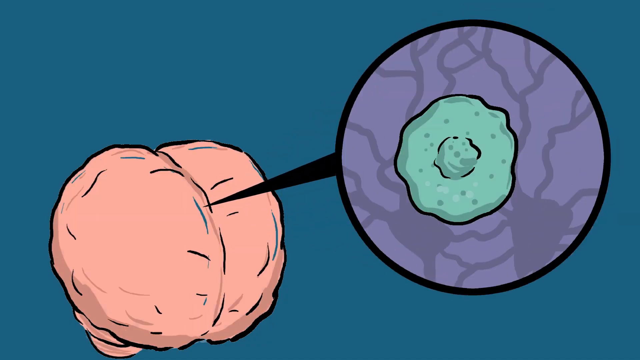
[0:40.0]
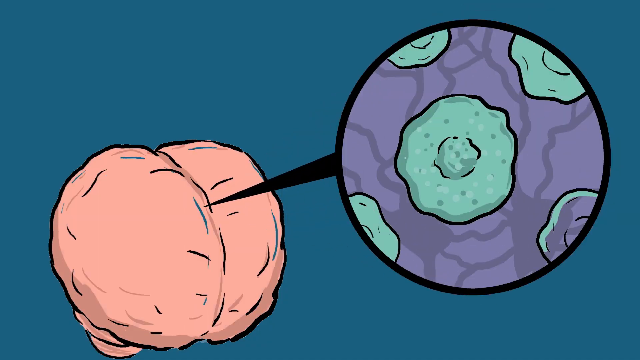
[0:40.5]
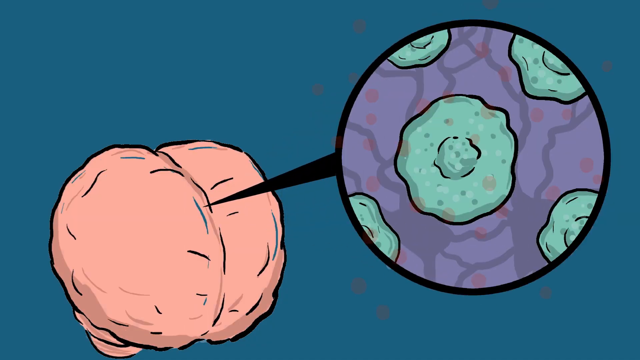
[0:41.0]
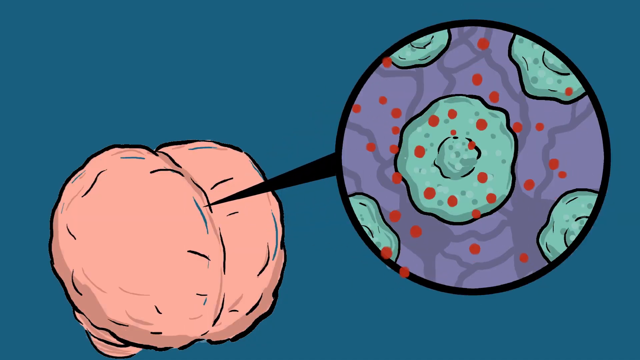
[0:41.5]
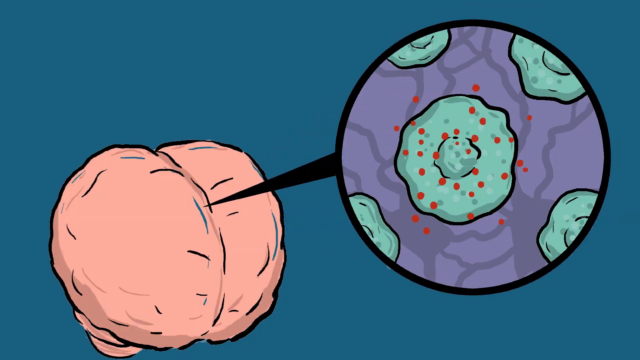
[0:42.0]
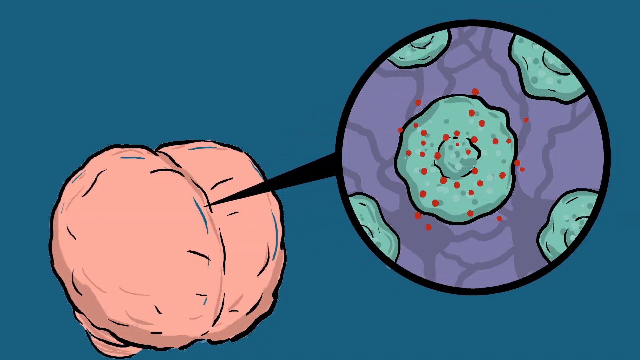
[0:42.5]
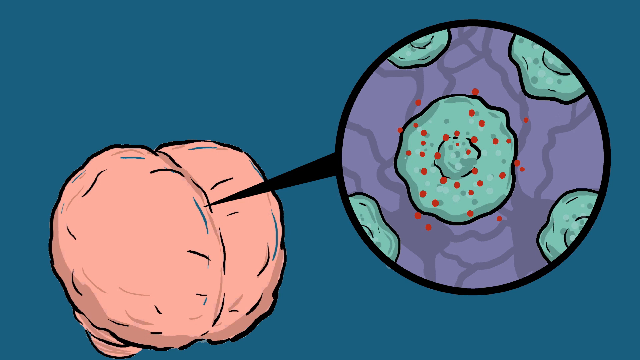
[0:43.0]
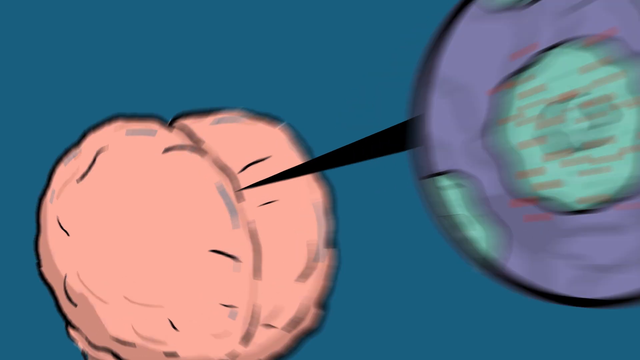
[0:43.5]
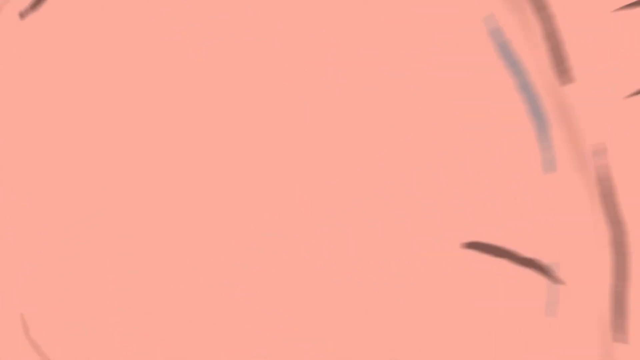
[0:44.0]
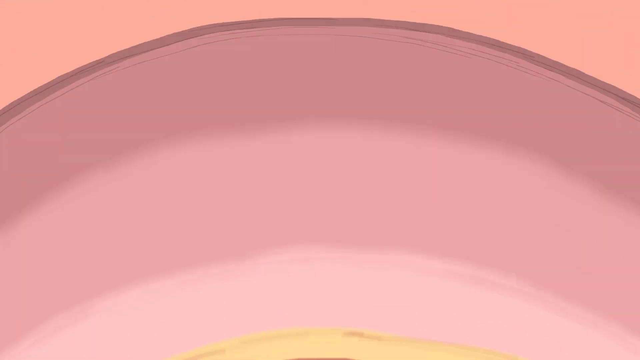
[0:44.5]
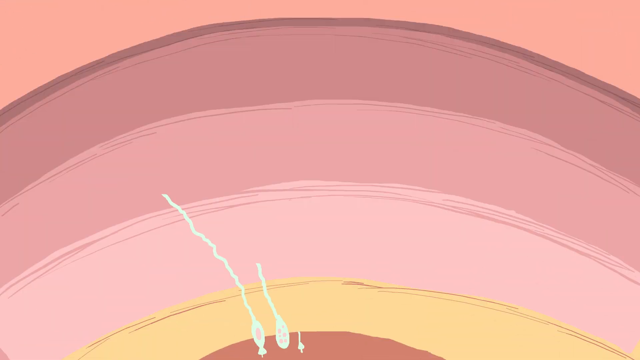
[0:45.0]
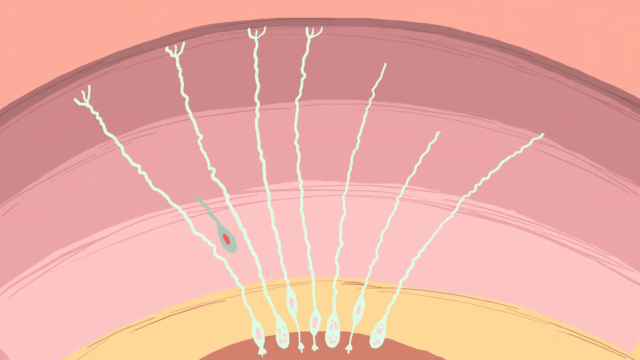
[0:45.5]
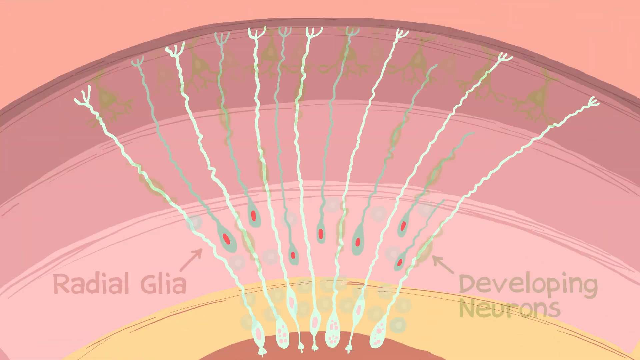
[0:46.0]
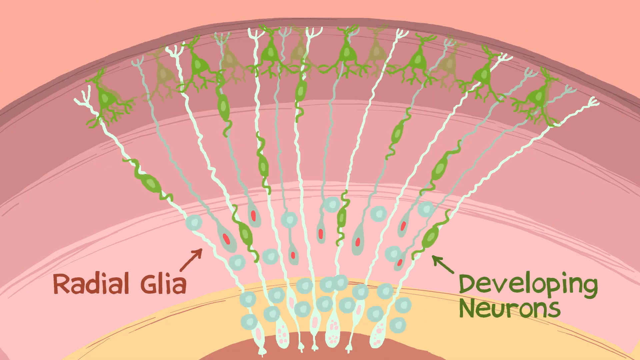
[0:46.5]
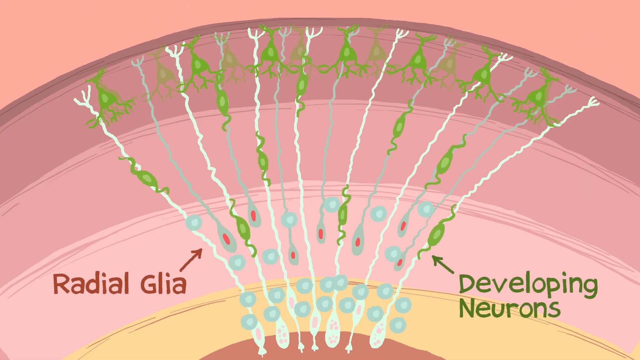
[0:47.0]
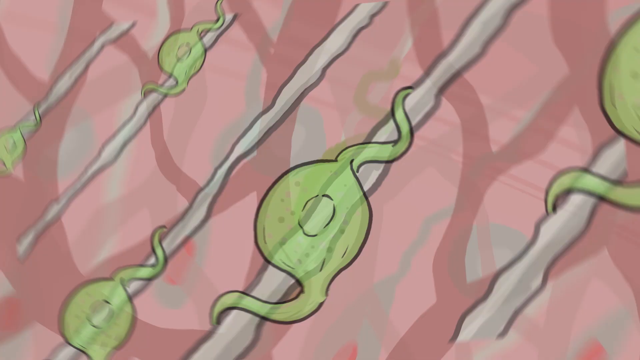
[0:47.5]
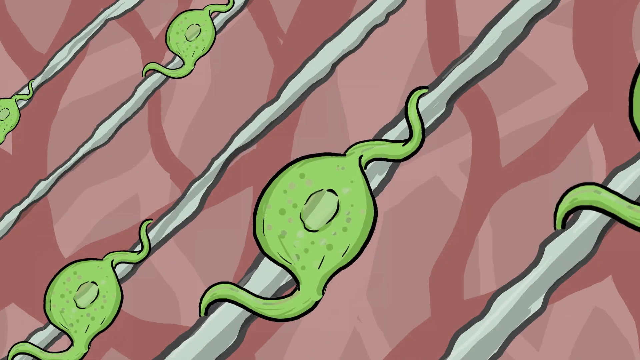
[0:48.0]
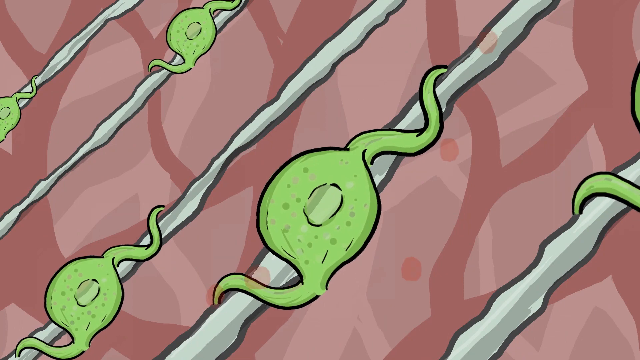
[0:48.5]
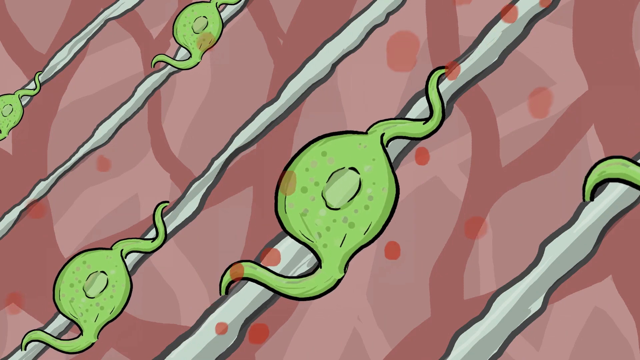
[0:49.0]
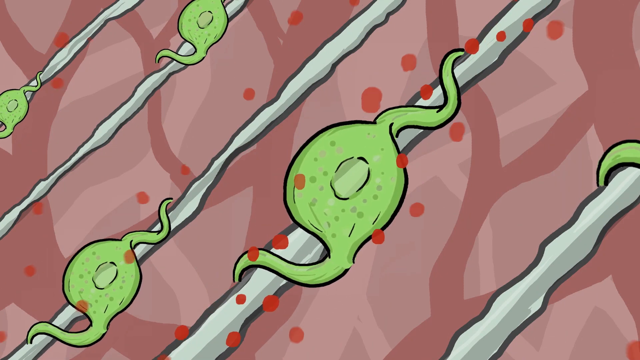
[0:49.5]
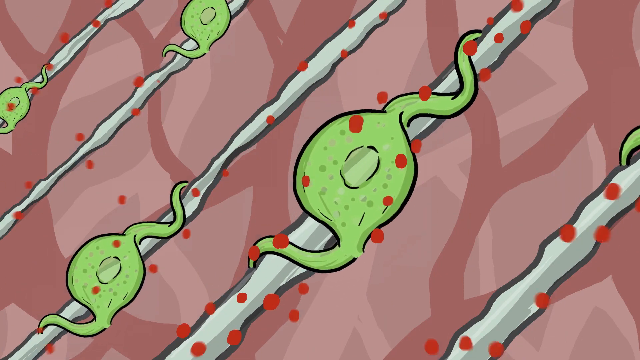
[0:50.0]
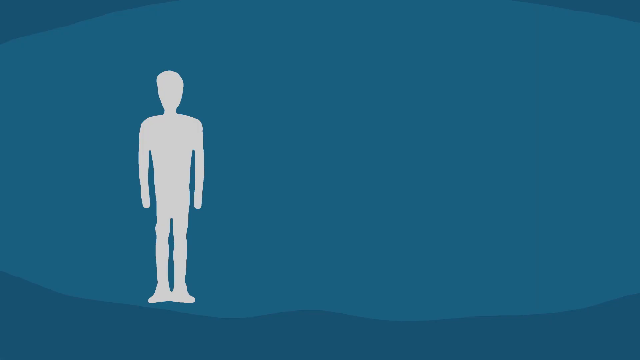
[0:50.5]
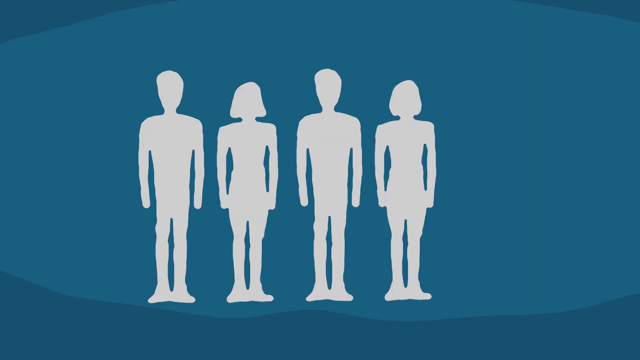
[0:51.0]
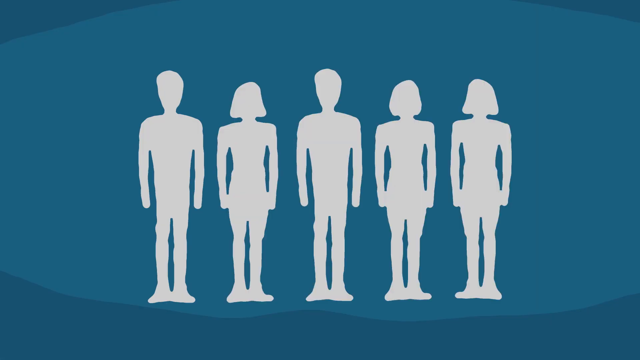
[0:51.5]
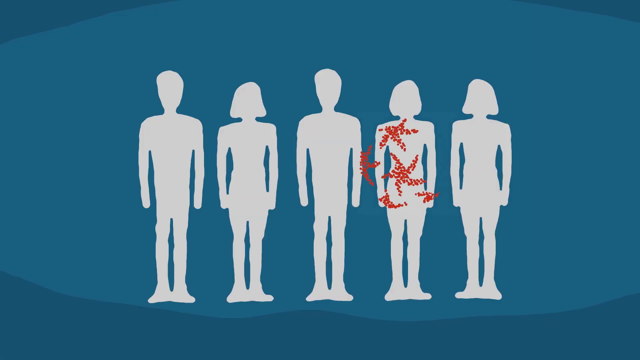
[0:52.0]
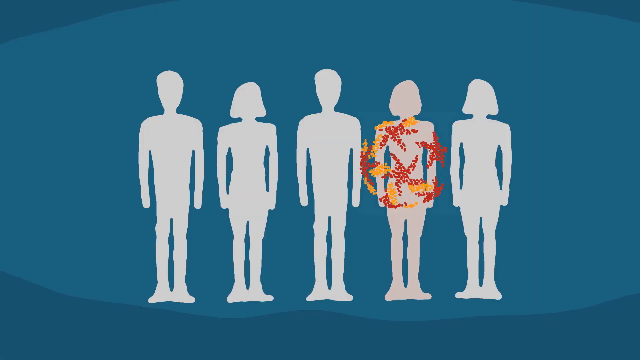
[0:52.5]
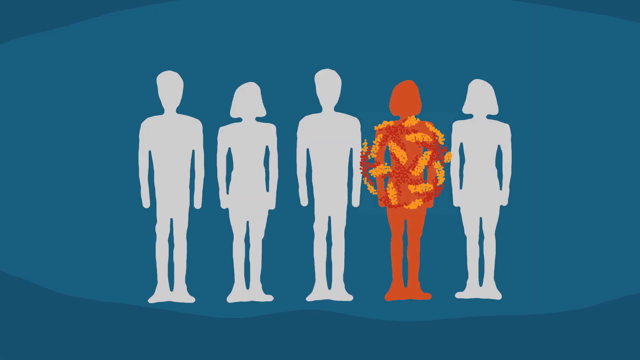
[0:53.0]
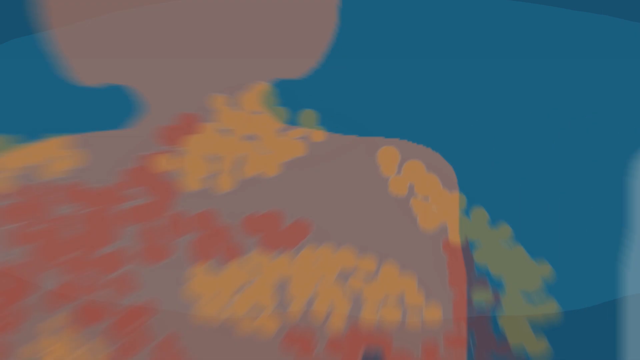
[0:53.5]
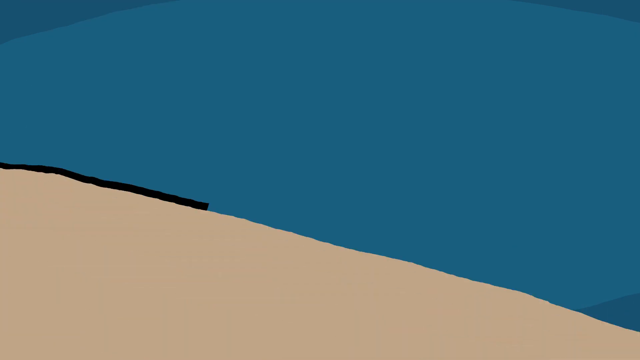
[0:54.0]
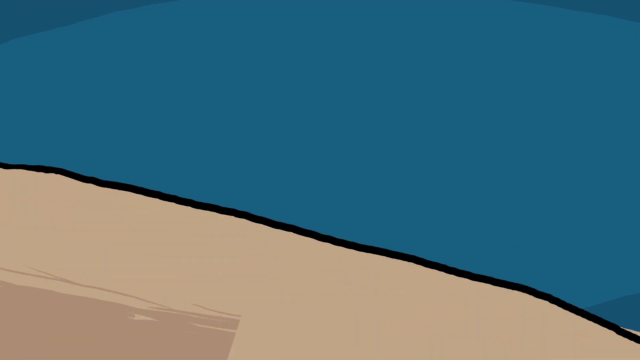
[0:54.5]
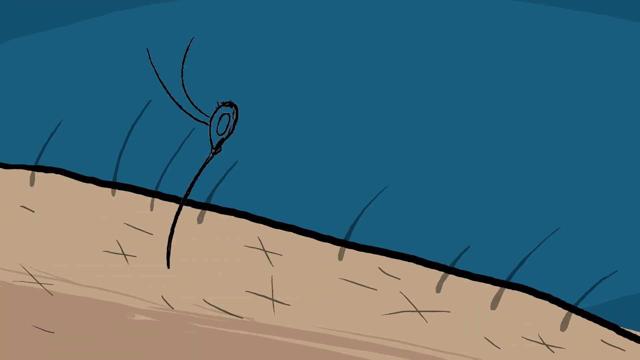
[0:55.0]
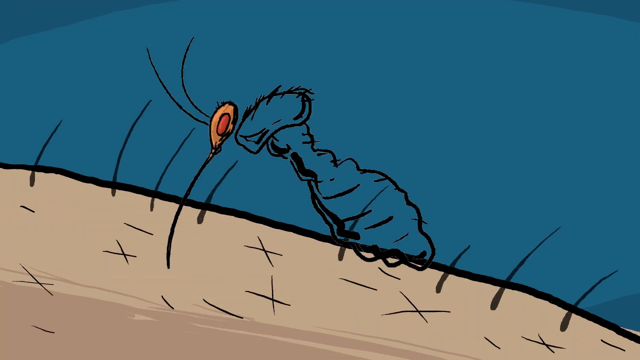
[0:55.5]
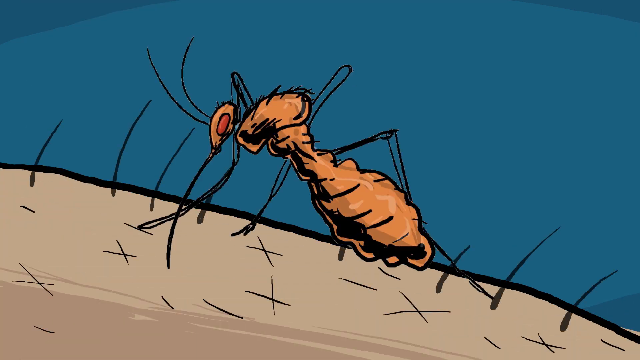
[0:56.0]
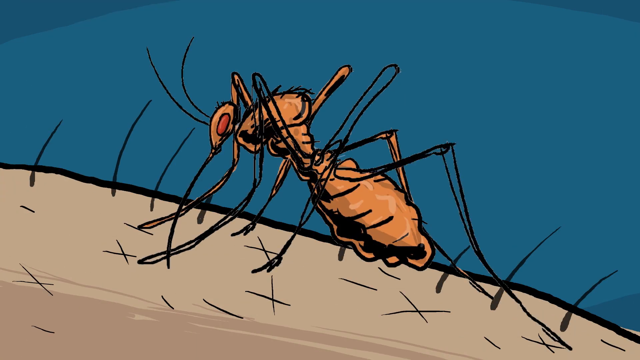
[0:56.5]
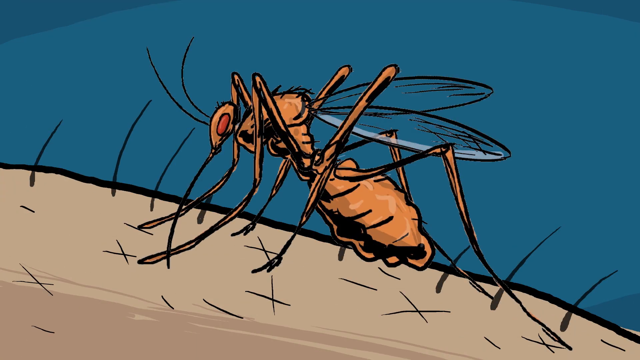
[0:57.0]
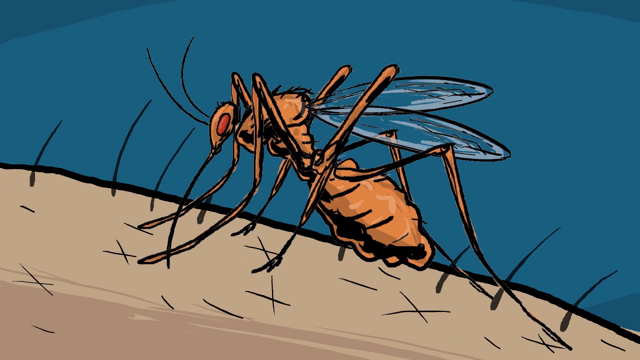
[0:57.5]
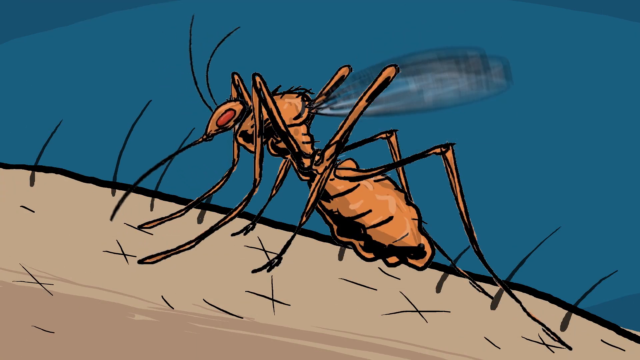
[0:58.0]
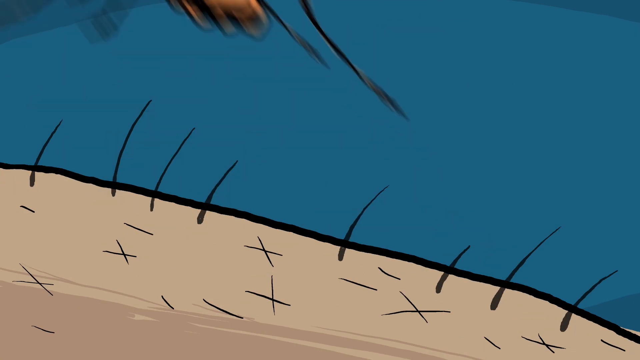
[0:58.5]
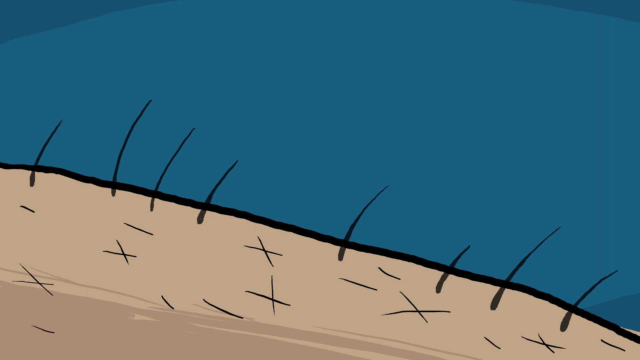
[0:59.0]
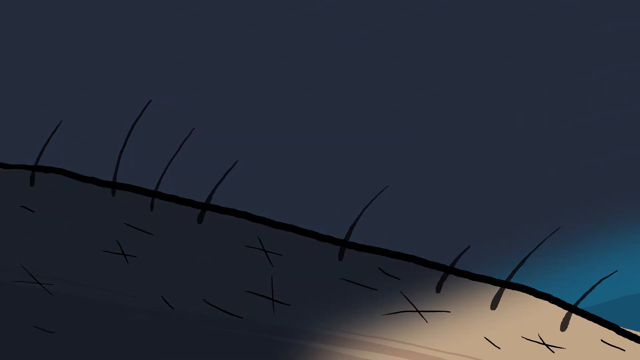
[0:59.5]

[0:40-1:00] Green egg-like images are drawn within the purple circle, and orange dots appear on one of these egg-like structures. The view zooms in on the brain, showing strata in coloured layers from the top down to a yellowish bottom layer, with white tendrils going up from the bottom of the screen. Text at the bottom left points up to one of the tendrils, reading "radial glia", and green formations attach to them, especially along the arc at the top, with green text at the bottom right and arrows pointing to them reading "developing neurons". The view zooms in on one of these neurons as it makes its way up a tendril; it is still shaped like a green egg but has tentacles at either side grabbing onto the tendrils and pulling it along. The orange dots arrive on the screen. The scene fades to a blue screen showing white silhouettes of, from left to right, a man, a woman, a man, a woman and a woman. The woman second from the right has the red starfish-style dot pattern and orange sausage pattern from the start of the video drawn on her body in dots, and then her whole silhouette turns orange. A cut leads to a drawing forming of a close-up of an arm at the bottom of the screen, with flesh tones and hairs coming out of it, and then something resembling a mosquito drawn on top in orange, as if it has been feeding on the arm. The insect faces left; its wings start to flap and it leaves the arm, heading up to the left.